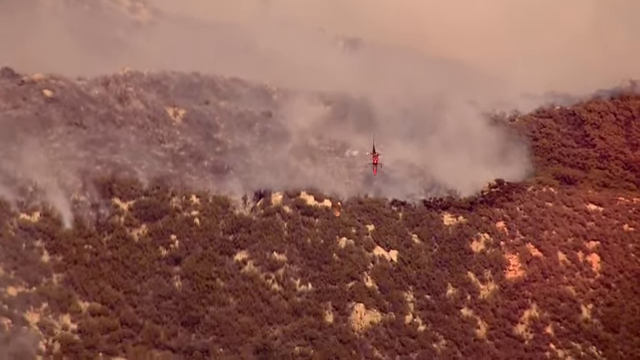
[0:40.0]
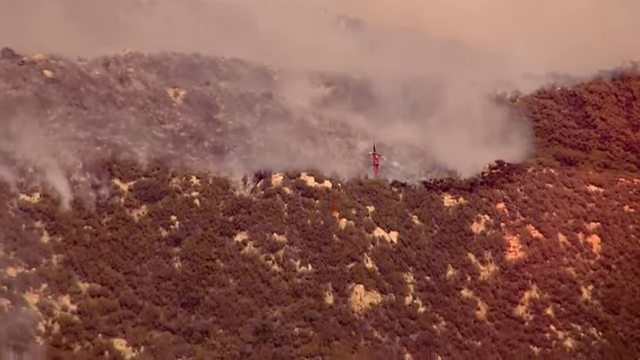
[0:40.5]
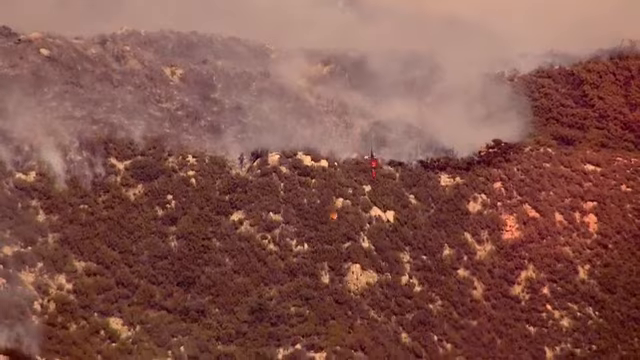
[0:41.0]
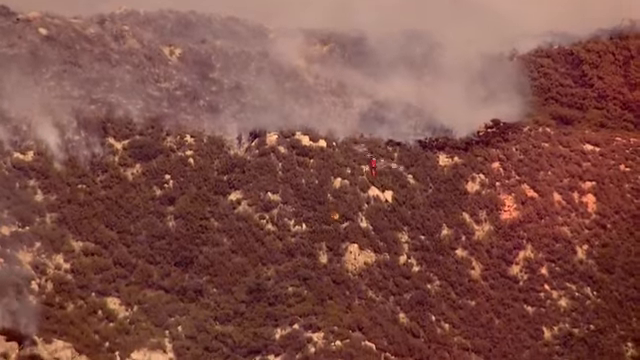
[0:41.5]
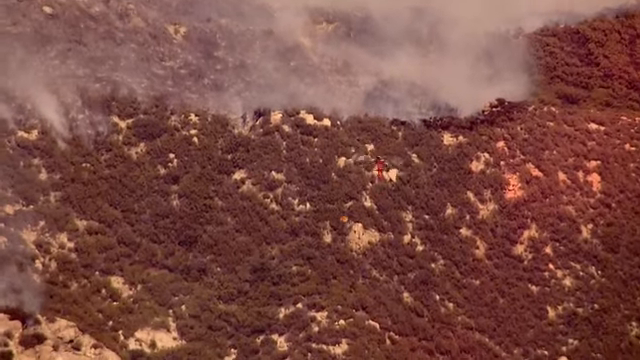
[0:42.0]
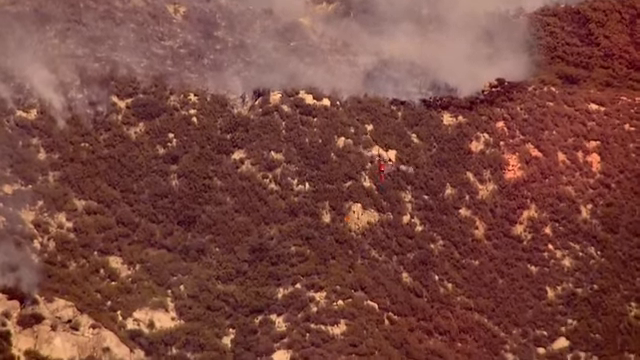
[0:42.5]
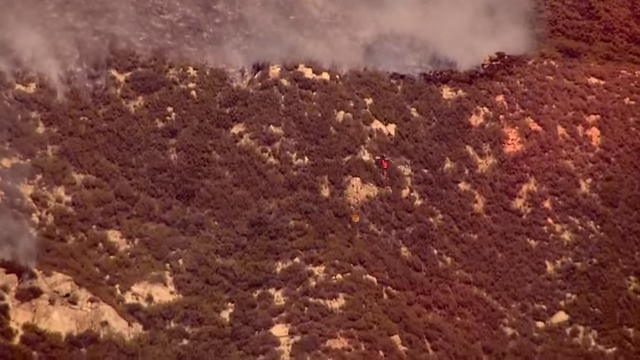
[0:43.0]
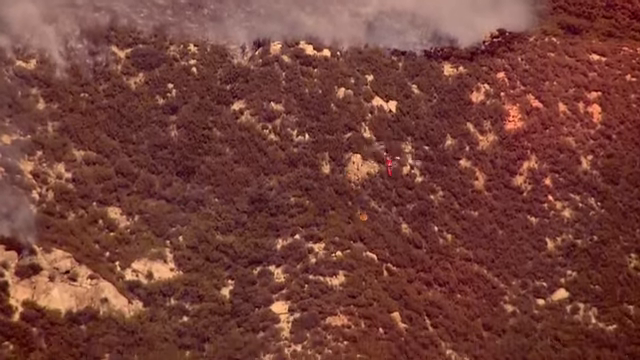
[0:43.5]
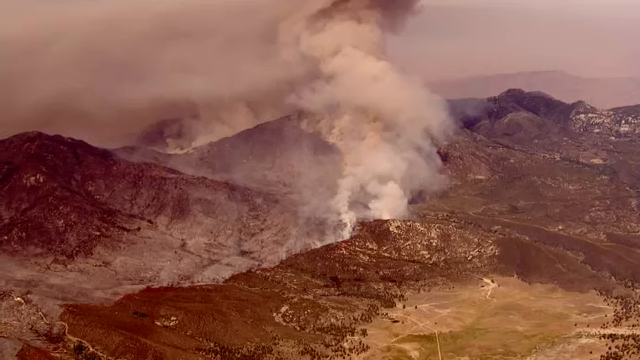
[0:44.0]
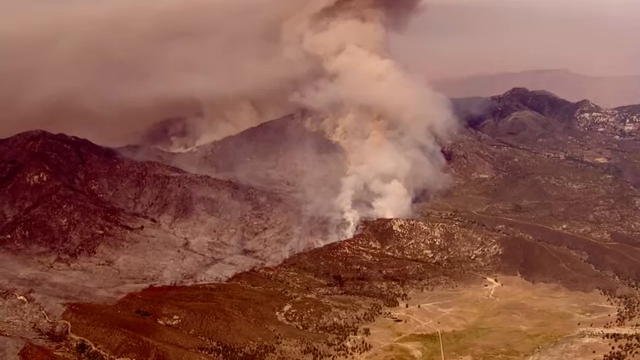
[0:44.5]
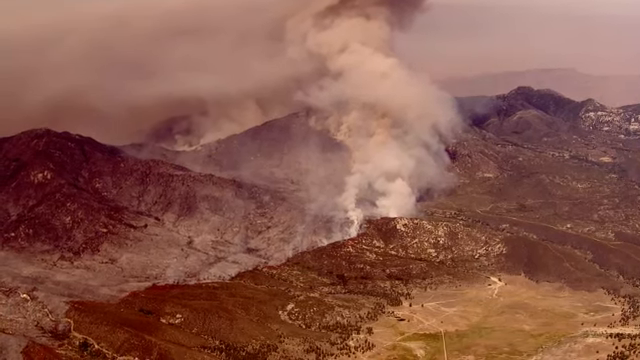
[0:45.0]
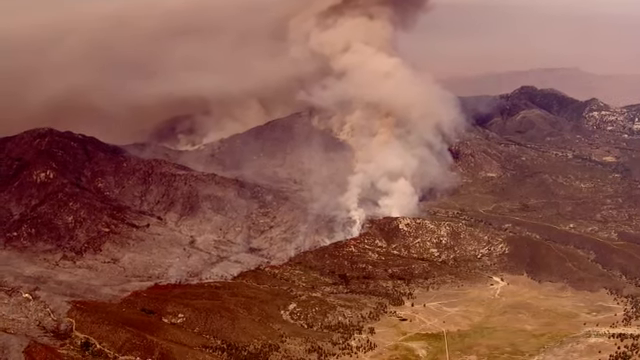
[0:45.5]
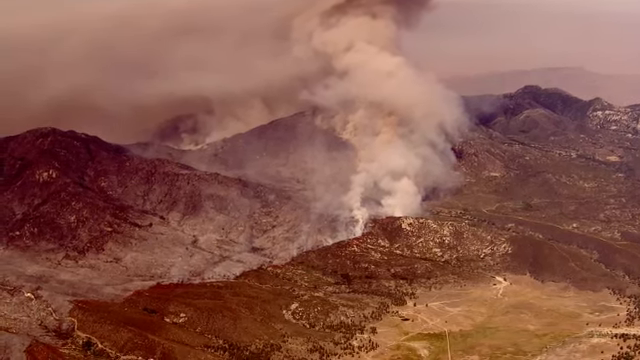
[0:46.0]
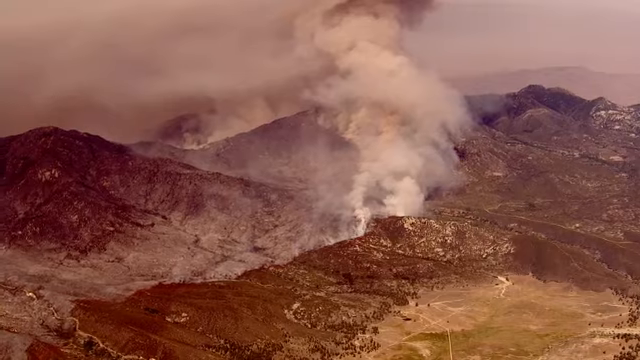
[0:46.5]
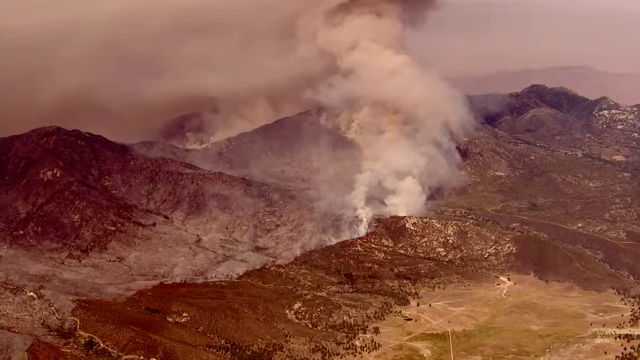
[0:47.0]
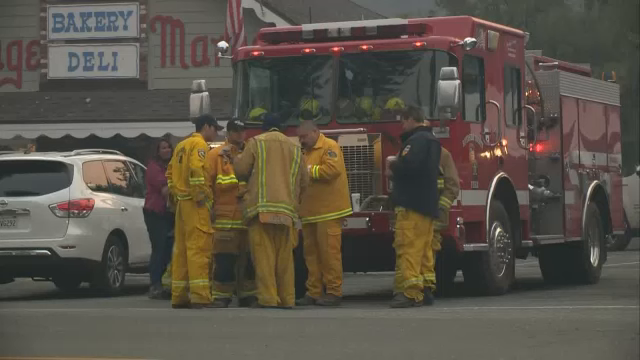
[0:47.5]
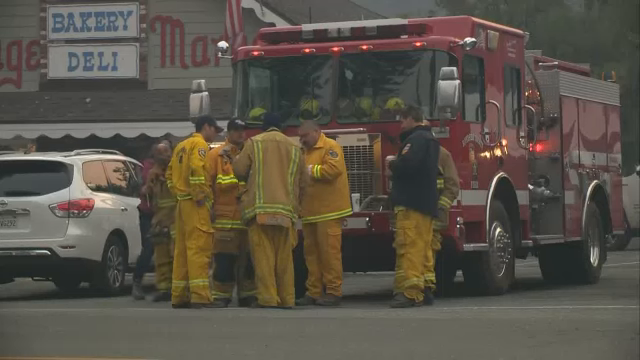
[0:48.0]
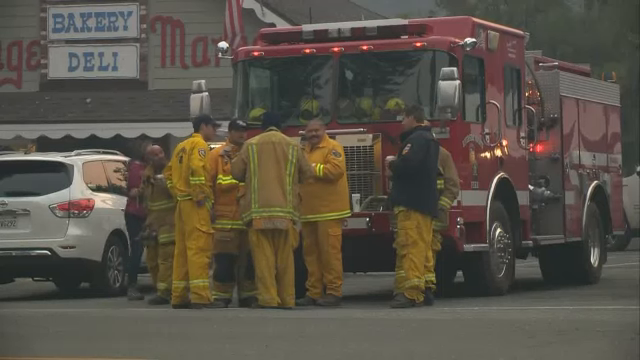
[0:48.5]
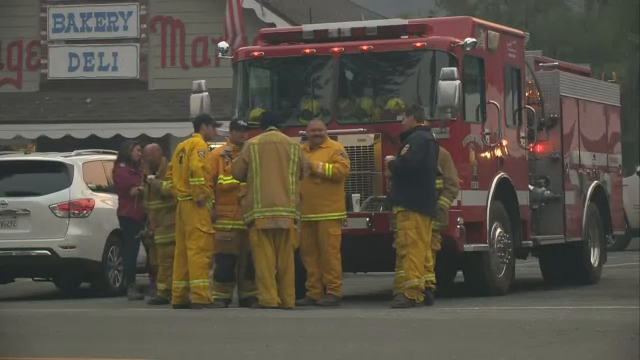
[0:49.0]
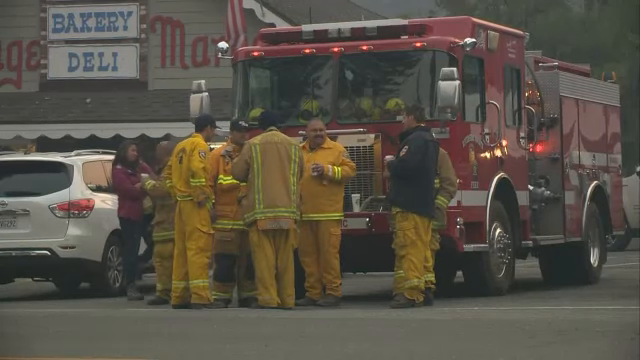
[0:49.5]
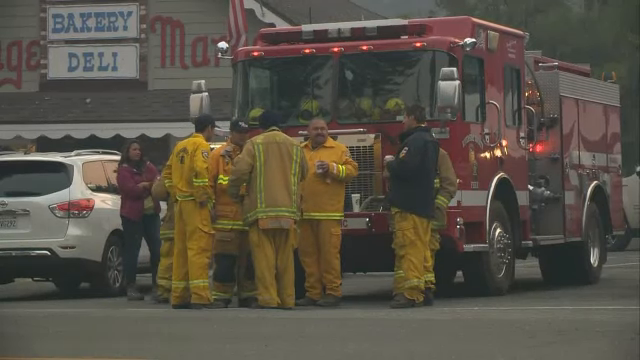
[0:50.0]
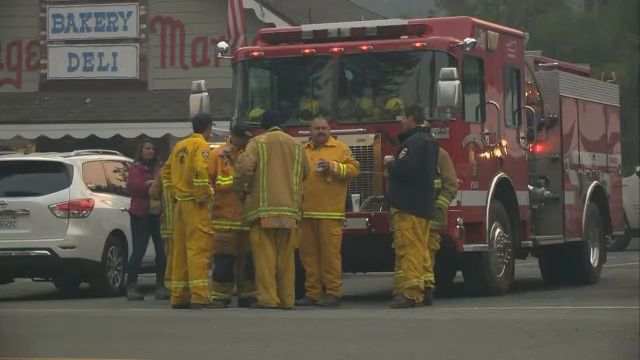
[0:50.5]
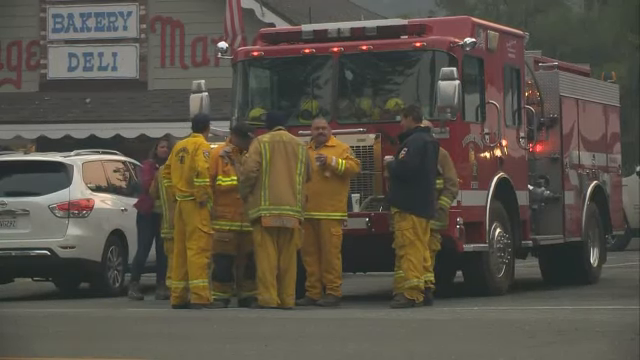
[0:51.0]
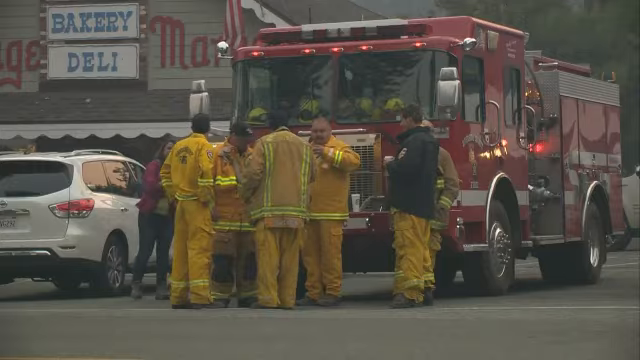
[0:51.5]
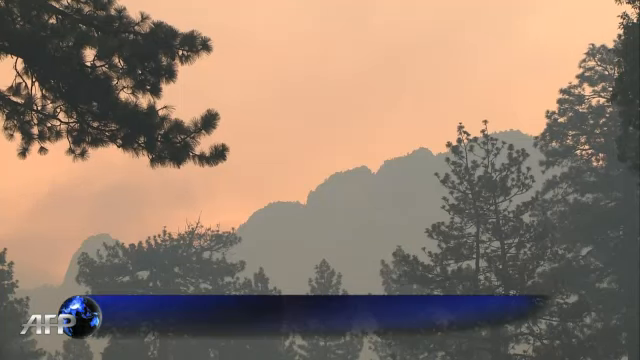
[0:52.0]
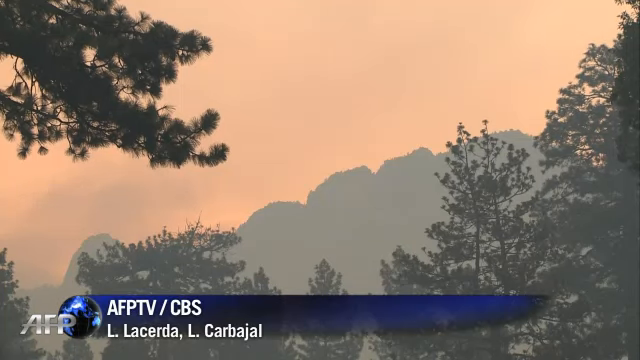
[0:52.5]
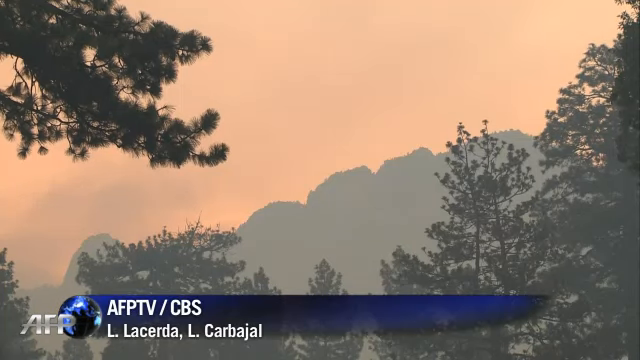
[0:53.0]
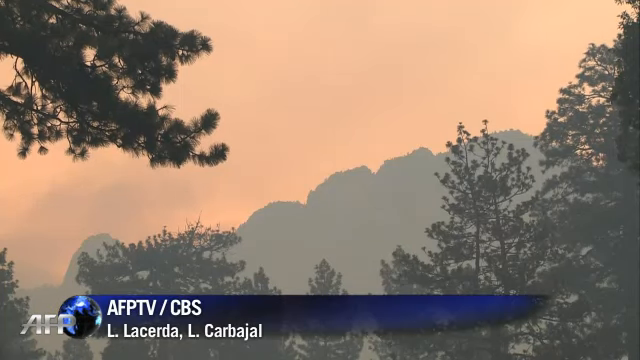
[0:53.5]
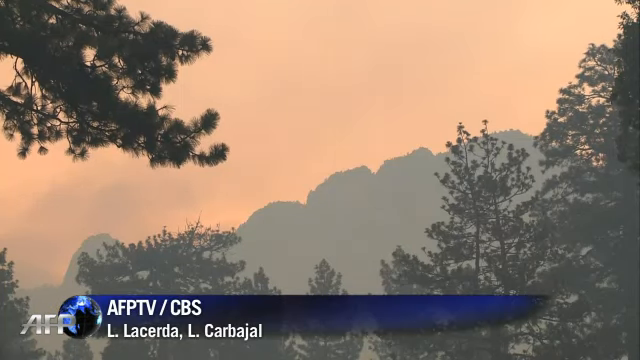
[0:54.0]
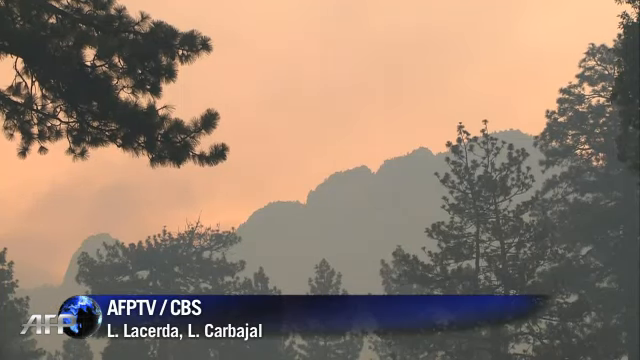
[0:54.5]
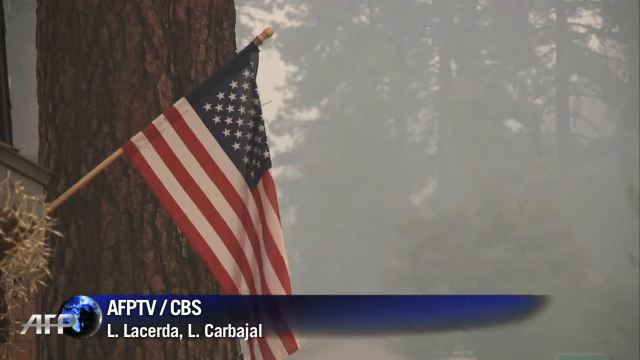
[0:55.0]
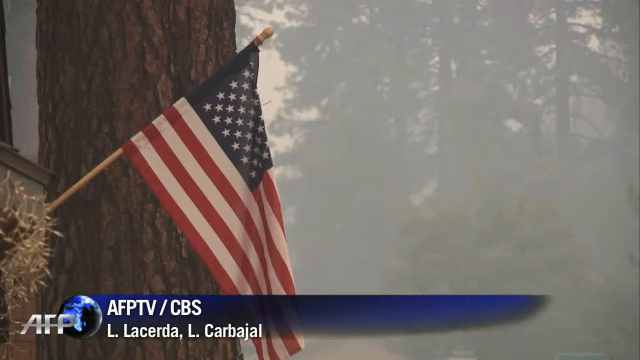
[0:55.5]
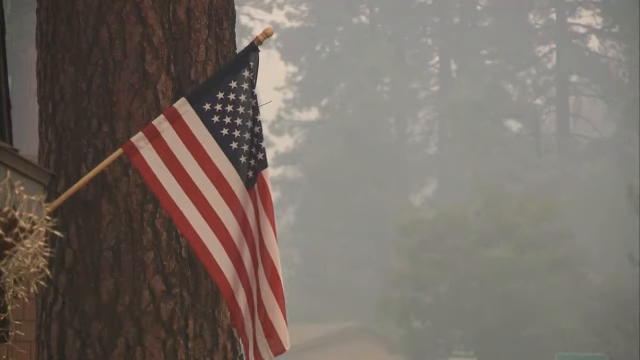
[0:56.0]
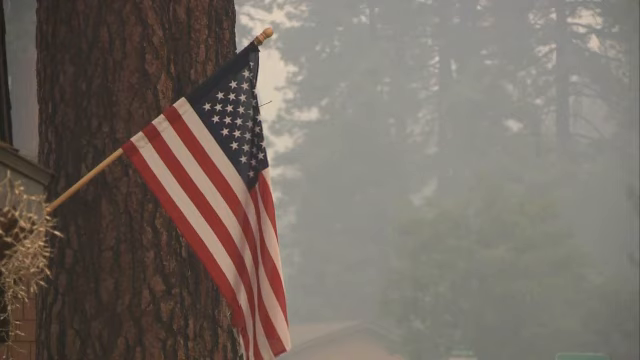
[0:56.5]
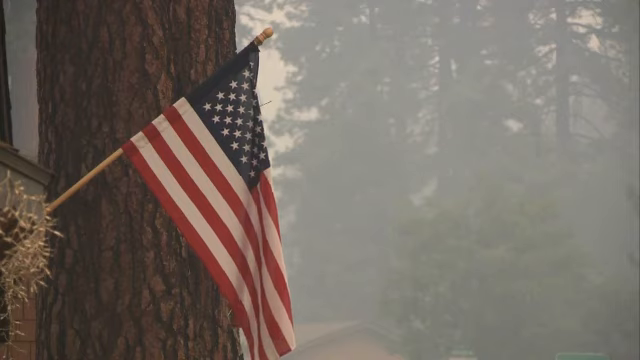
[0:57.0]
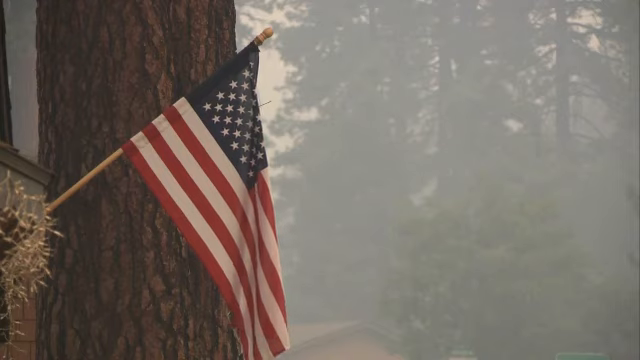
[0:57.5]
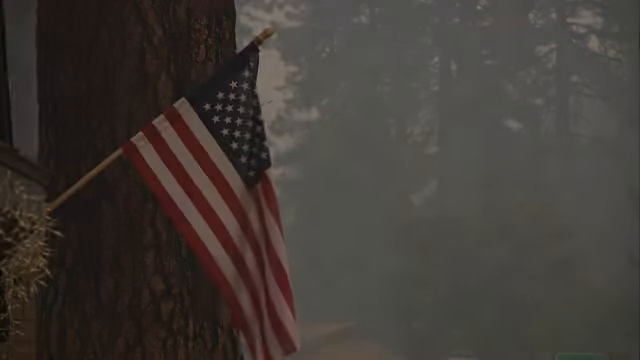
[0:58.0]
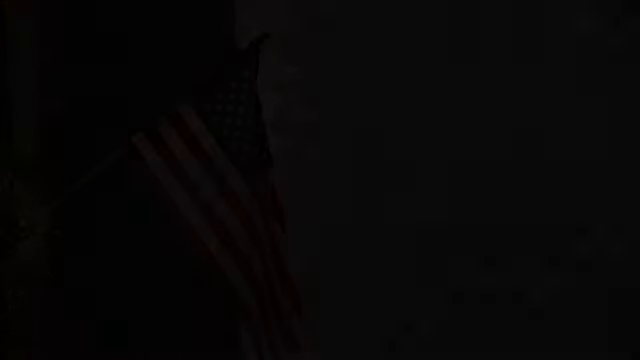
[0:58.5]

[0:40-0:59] A helicopter flies over a forest, with what looks like a fire behind it; smoke comes up from behind as the helicopter flies downwards. The scene changes to a bunch of smoke coming up from mountainous hill areas with lots of greenery. Next, a group of firemen in their fireman jackets stand in front of a red fire truck, talking to each other; there is some kind of bakery to the left and a white car to the left too. The scene then changes to something like a sunset view of a forest, looking up at a mountain. At the very bottom, text reads "AFP TV CBS" and "El Acerda, El Carbajal," apparently the name of the area. Then an American flag hangs in front of a tree, with some smoke to the right of it, and the scene goes dark. The fire seems to be finally out, leaving lots of smoke everywhere, and the fire department that probably put out the fire is shown meeting in front of their fire truck.